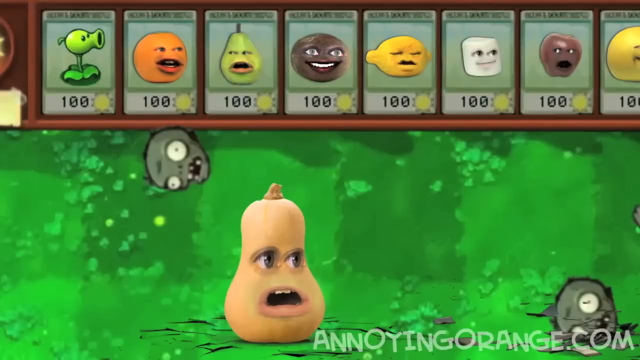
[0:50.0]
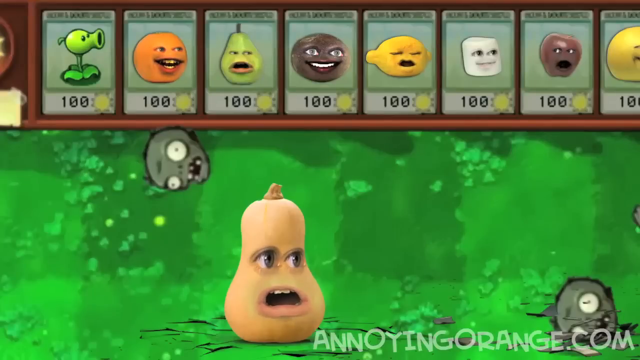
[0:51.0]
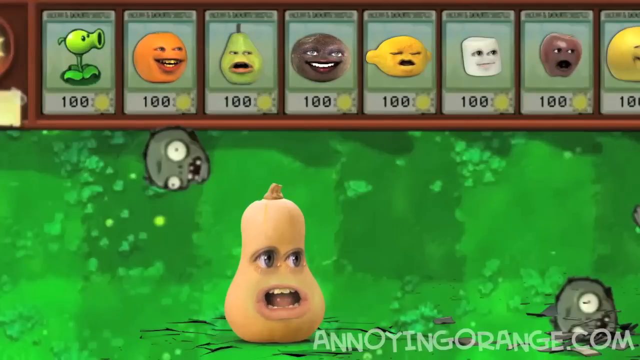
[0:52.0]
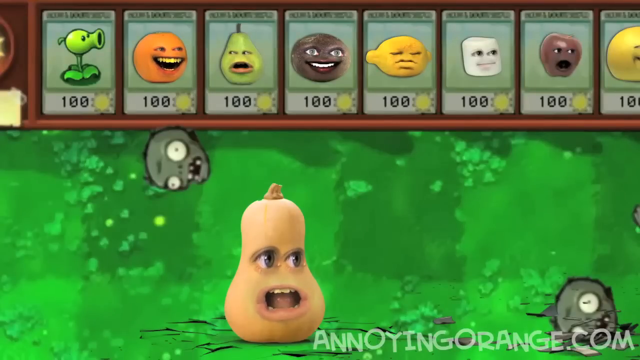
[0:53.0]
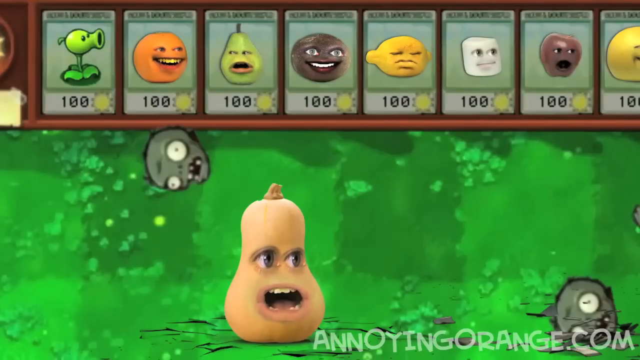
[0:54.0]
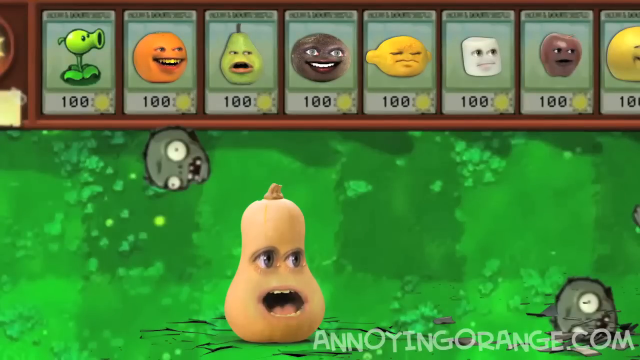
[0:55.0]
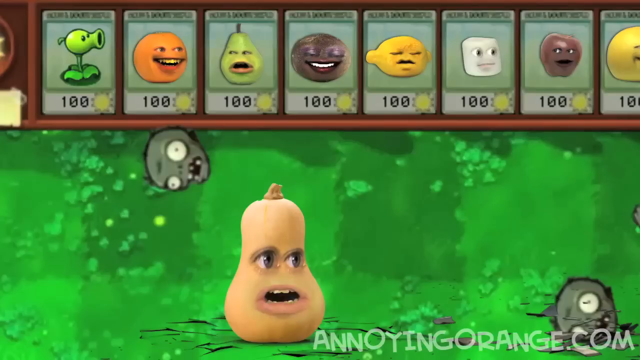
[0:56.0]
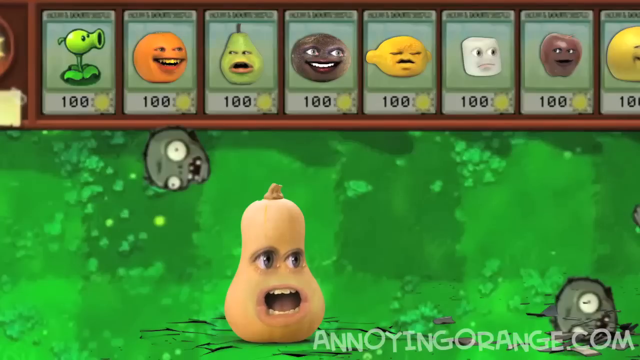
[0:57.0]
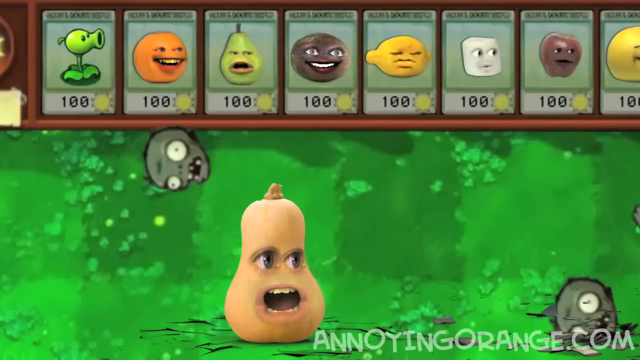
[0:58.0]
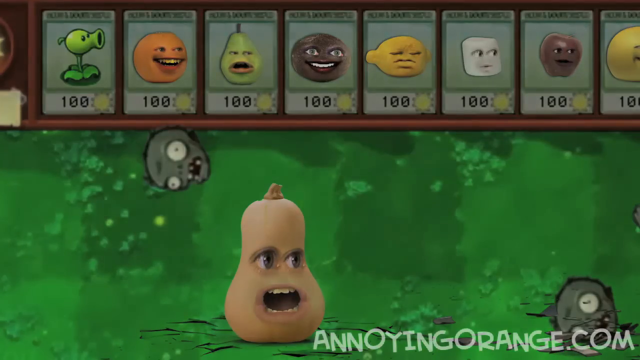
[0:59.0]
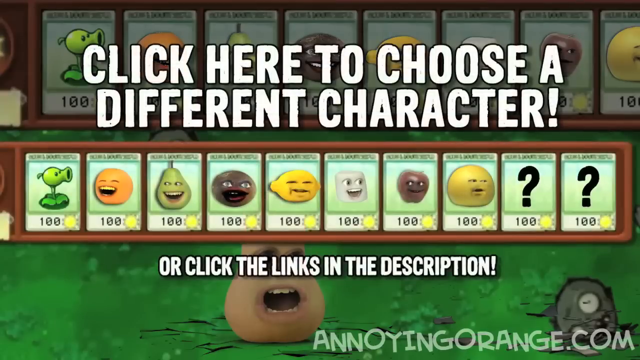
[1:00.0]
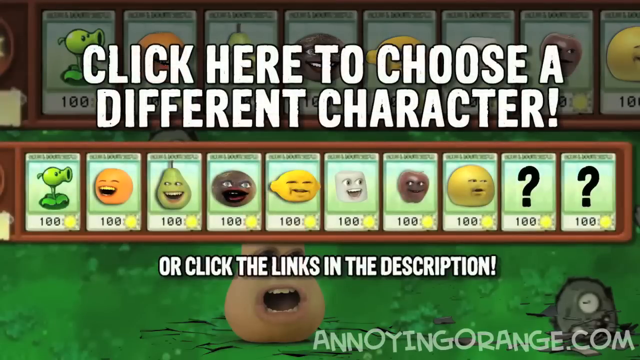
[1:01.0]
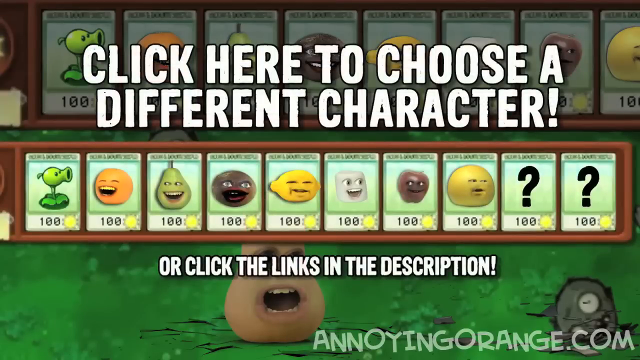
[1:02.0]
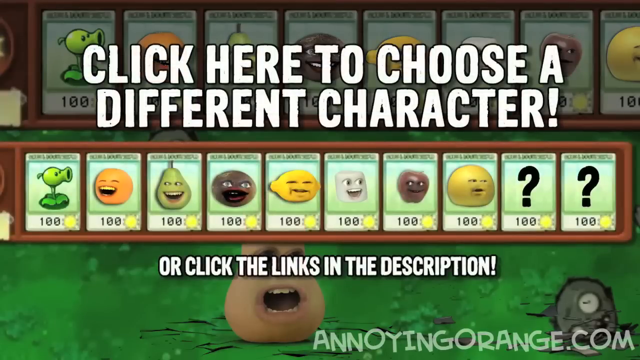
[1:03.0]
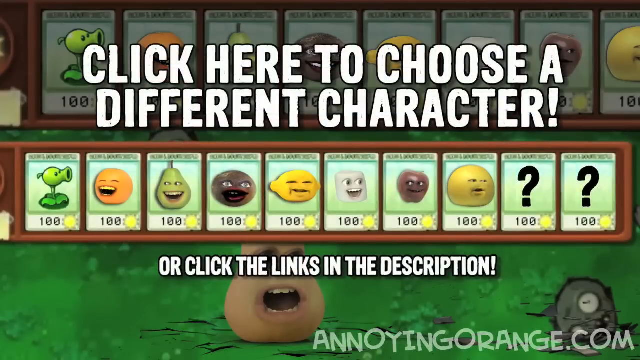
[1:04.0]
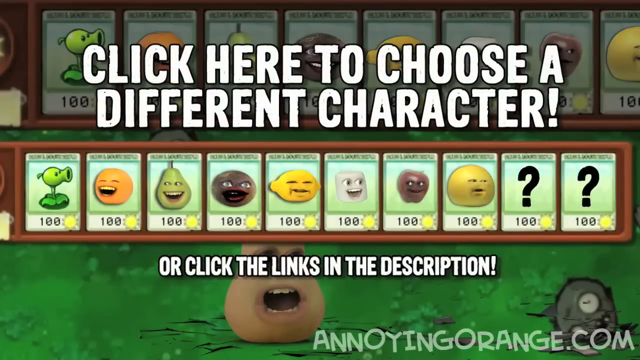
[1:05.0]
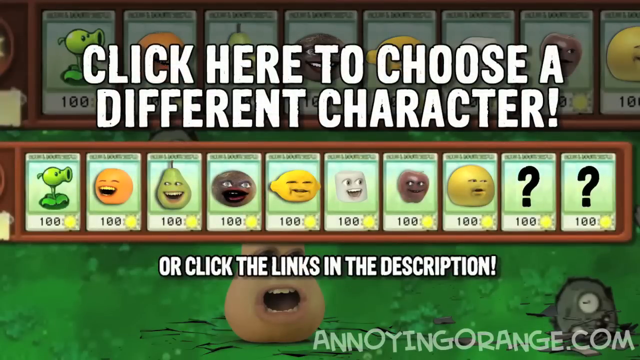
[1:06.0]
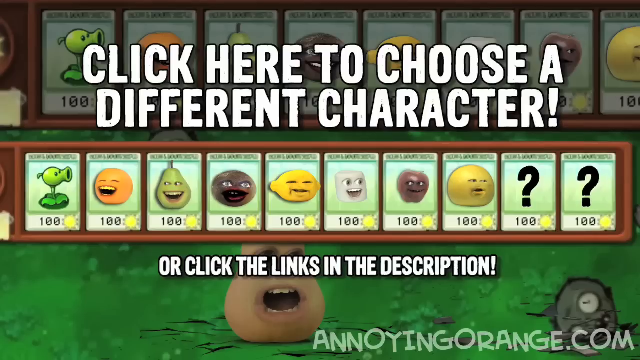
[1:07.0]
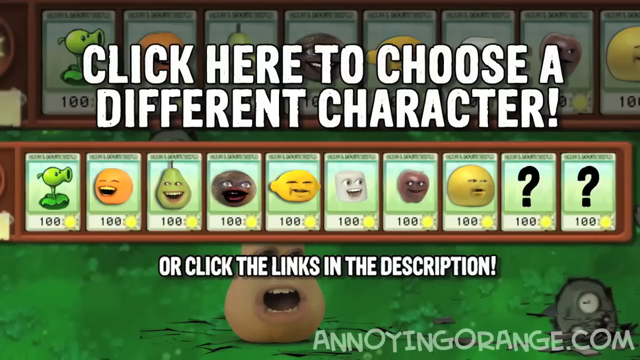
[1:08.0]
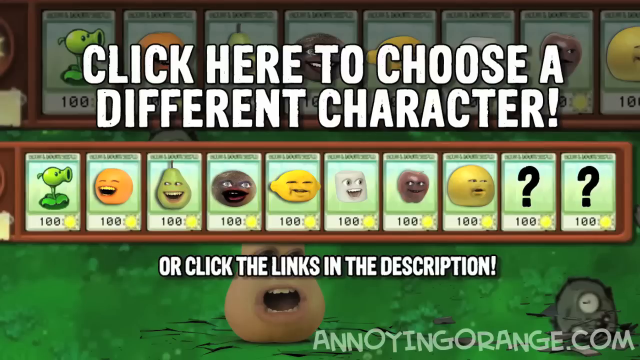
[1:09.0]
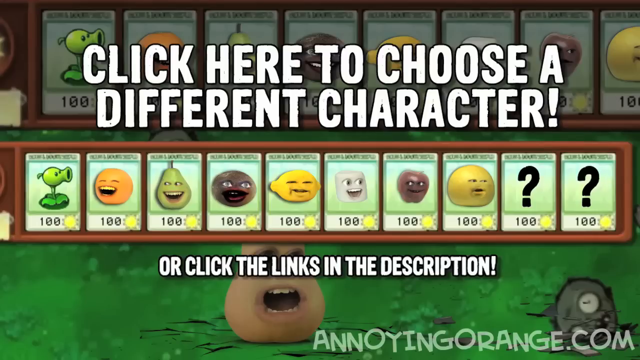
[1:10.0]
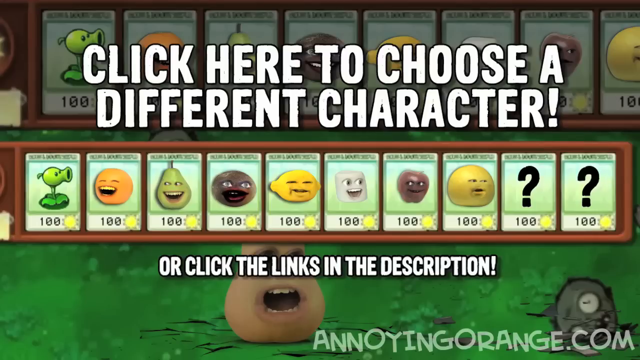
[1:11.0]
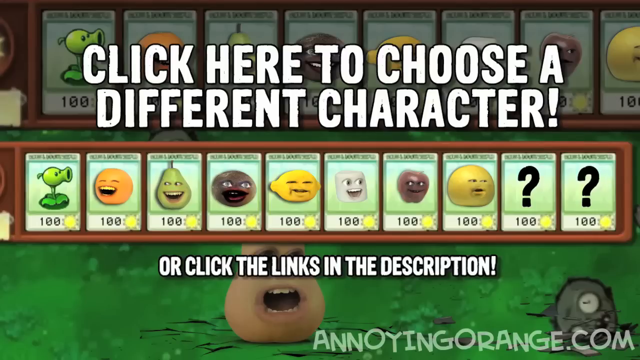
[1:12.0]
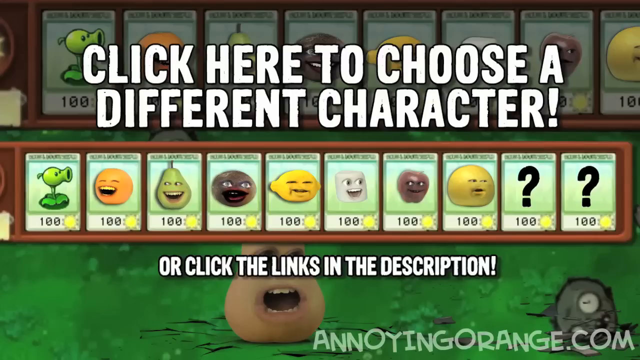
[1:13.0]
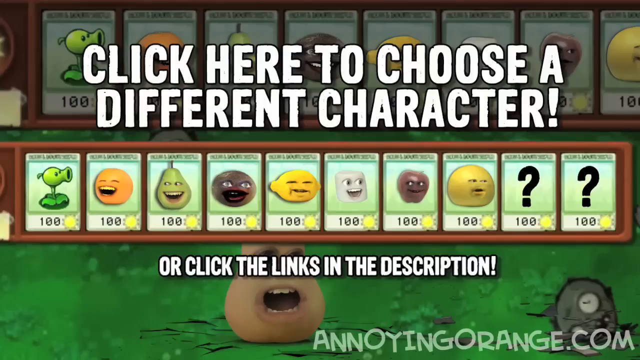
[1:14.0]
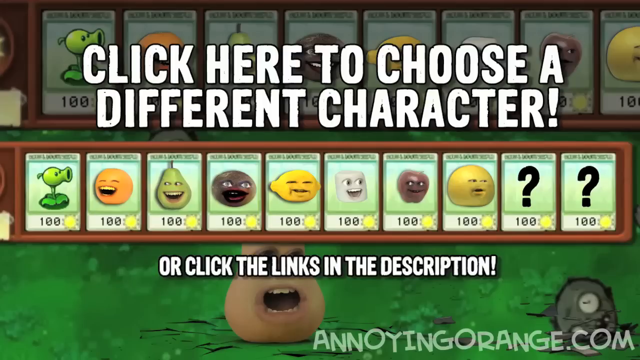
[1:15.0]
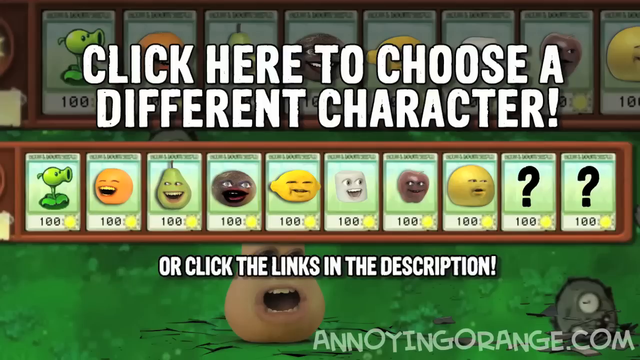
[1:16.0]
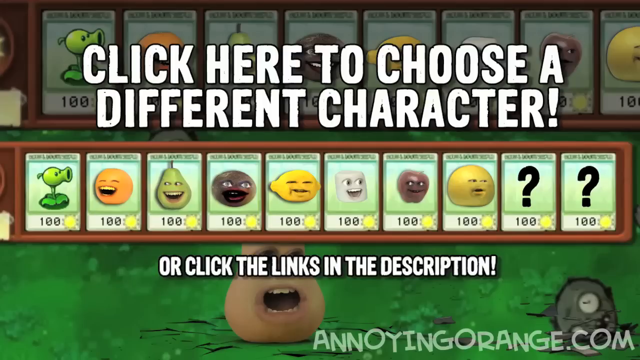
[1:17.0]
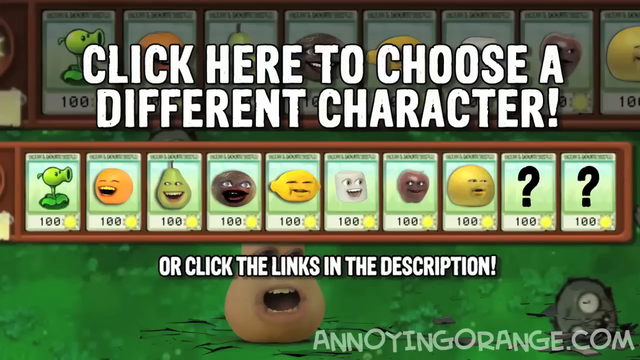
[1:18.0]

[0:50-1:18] The orange continues to speak in the bar at the top of the screen, which holds the array of fruit and vegetables. It finishes speaking, and the butternut squash beneath the bar starts speaking in response. The squash is still sitting on the lawn, with a zombie head above it to the left and another off to the right. As it finishes speaking, the gameplay freezes and capital white letters appear on the screen reading "Click here to choose a different character!" Beneath this lettering is the bar of fruit and vegetables, including the orange, a pear, a lemon and an apple. Under the bar, white text reads "Or click the links in the description". The frozen gameplay footage behind the message is faded to a darker colour than the message.